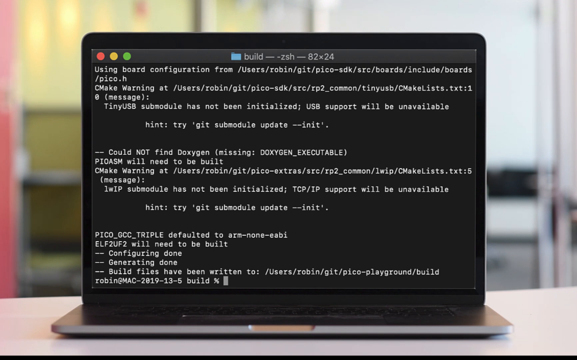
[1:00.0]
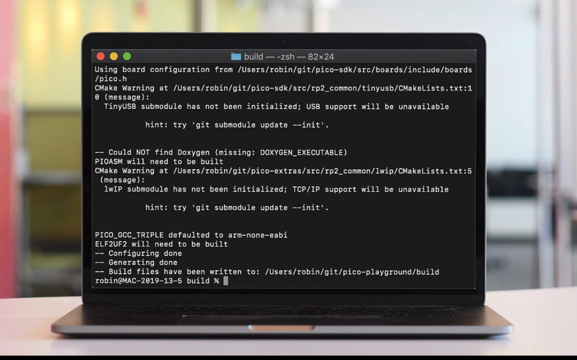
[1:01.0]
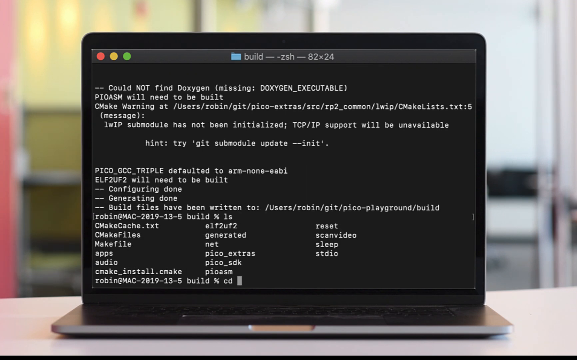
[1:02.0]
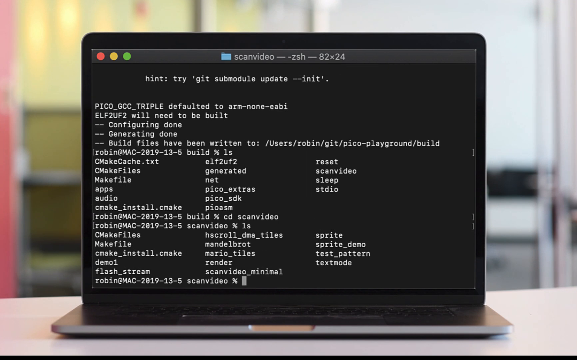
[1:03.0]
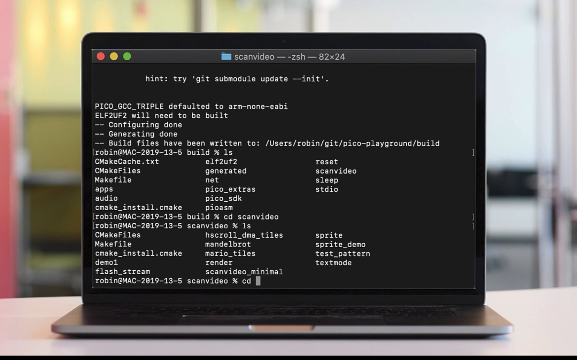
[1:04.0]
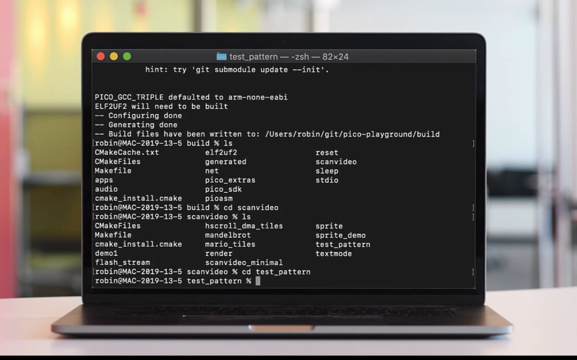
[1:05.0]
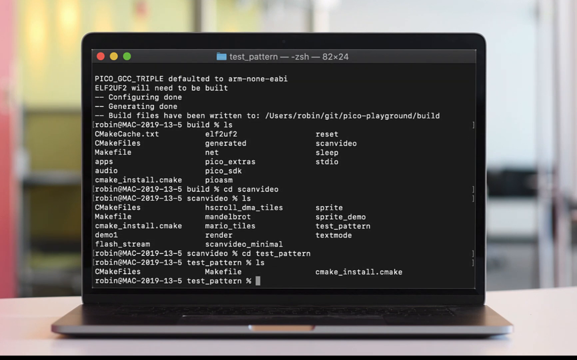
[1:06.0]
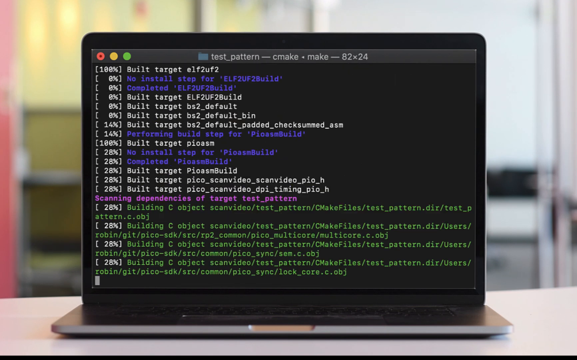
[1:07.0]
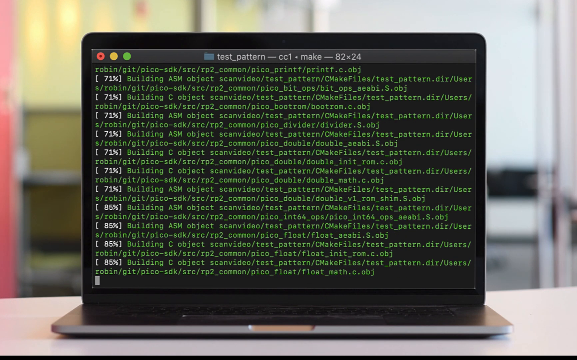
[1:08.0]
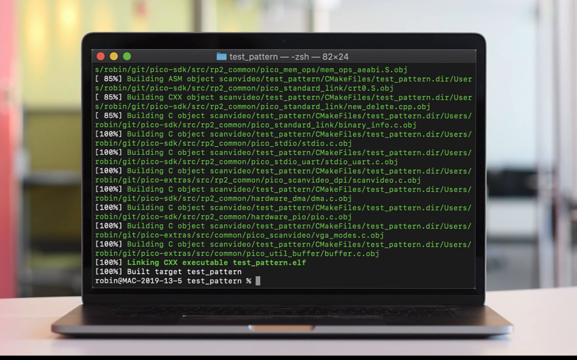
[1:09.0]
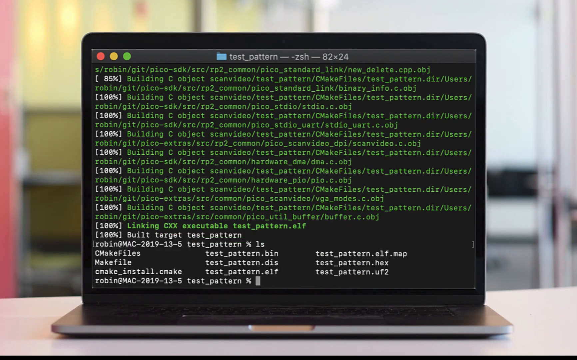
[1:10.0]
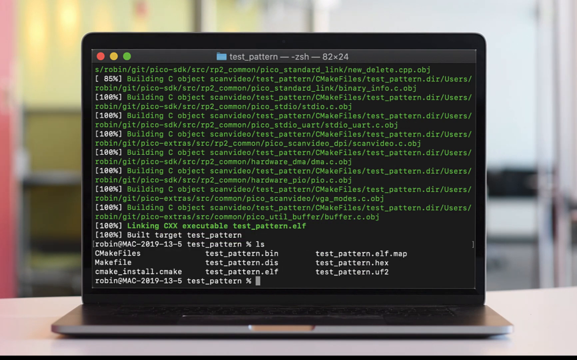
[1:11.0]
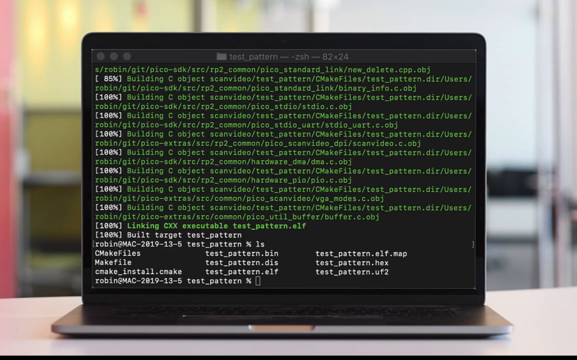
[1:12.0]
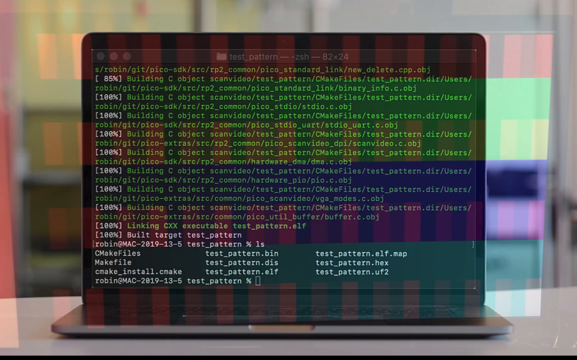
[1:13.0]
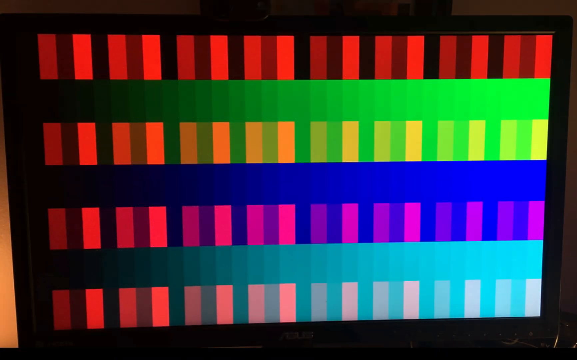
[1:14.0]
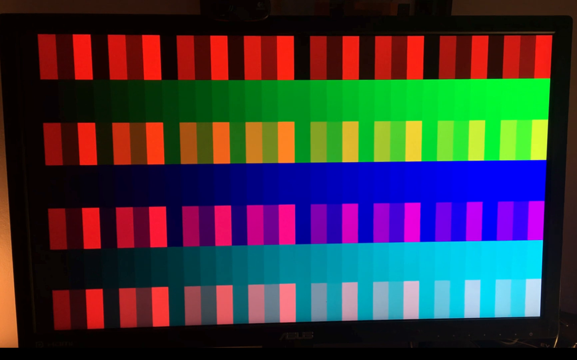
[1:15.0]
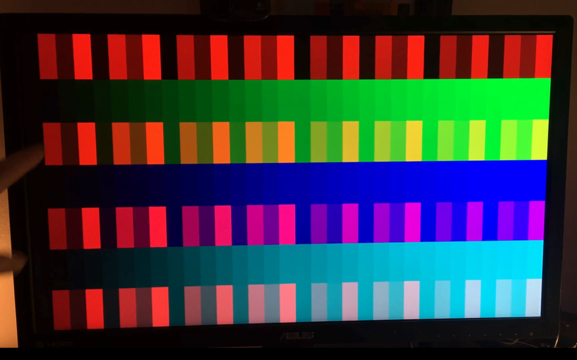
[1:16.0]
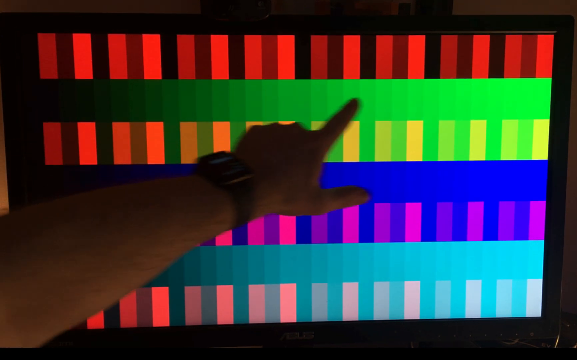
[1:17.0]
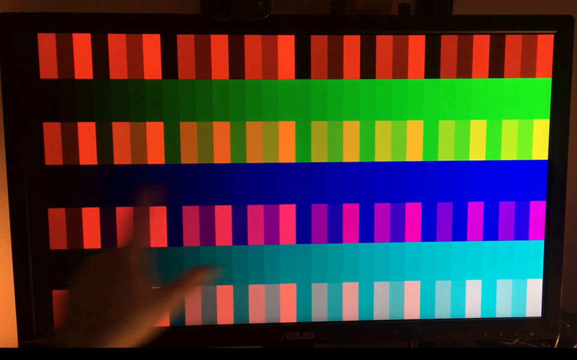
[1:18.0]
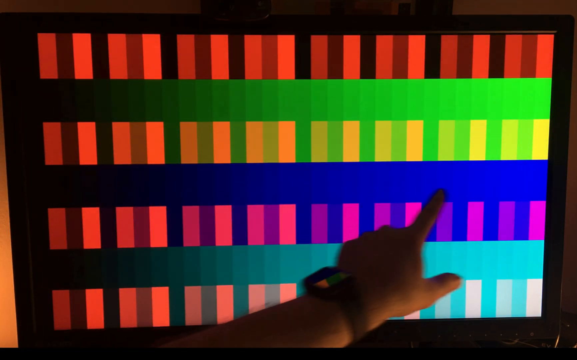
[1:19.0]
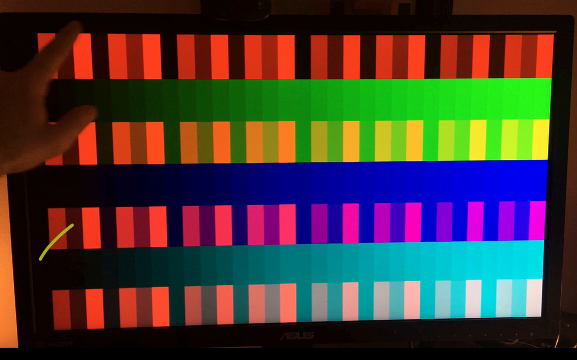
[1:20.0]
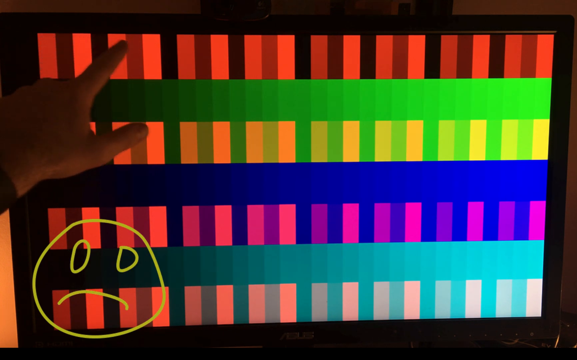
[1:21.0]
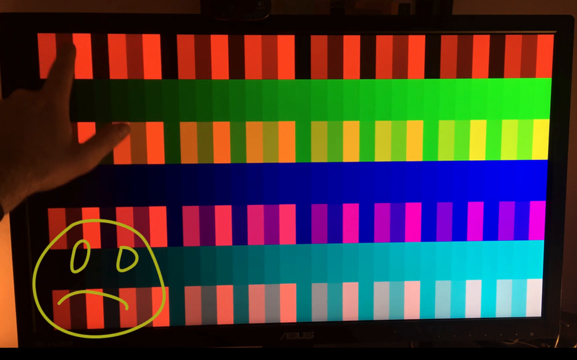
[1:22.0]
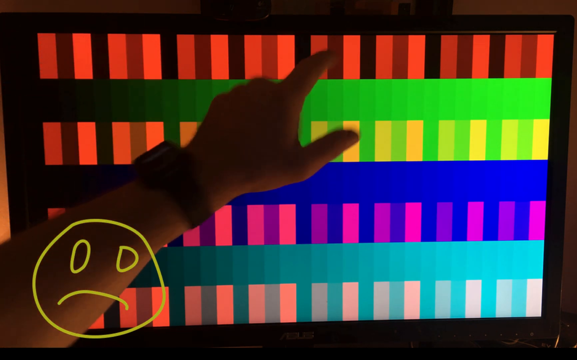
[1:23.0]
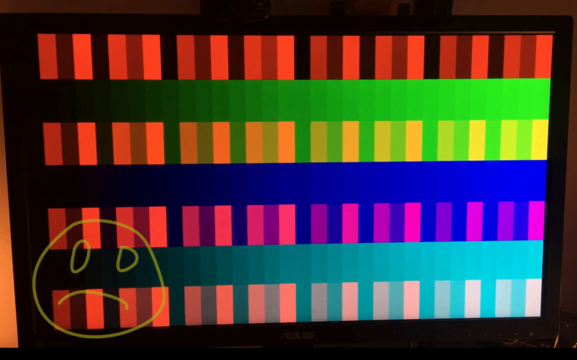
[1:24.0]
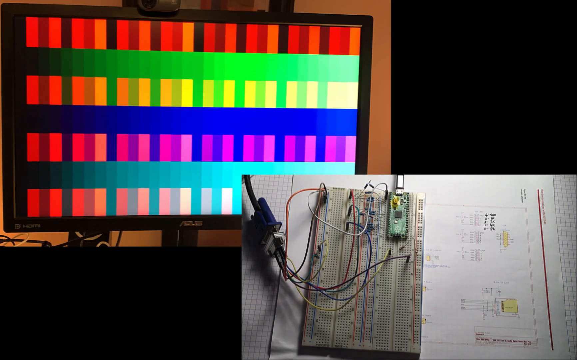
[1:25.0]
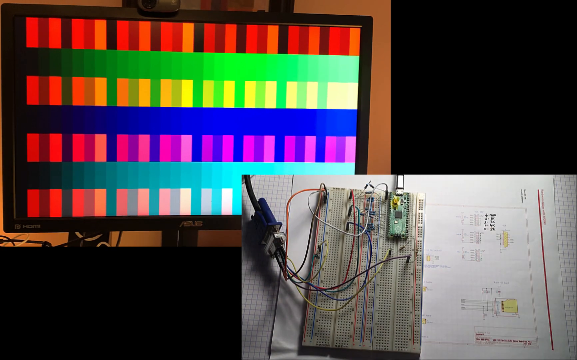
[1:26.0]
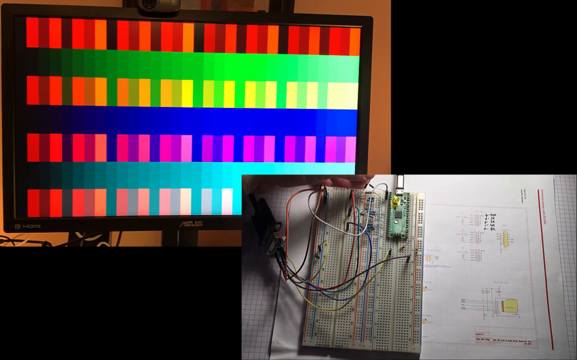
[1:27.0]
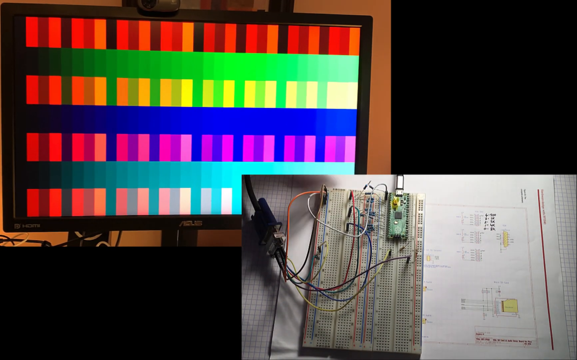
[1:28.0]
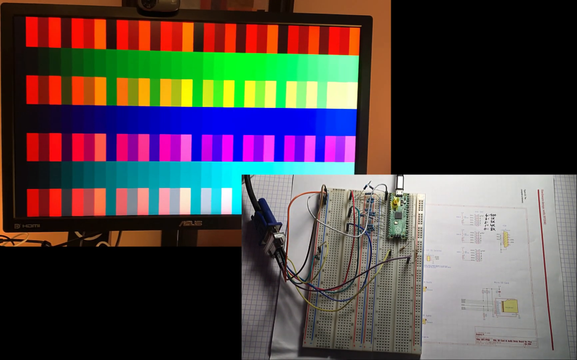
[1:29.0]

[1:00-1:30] A laptop computer is on a table, and its black screen shows code written in white text. The cursor moves from left to right entering code; the code turns green, then white again, and the cursor moves across the screen. The video transitions to a close-up of a computer monitor with what appears to be a webcam at the top. The screen shows multiple vibrant colors: oranges, neon greens, lime, electric blues, lavender, baby blue, and white. A person's left hand enters the frame and points to a section, then runs from left to right pointing out the colors. A drawn frowning face, like a stick person's head, appears at the bottom left of the screen. At the bottom right, an image appears of what looks like an electronic board and a white sheet of paper that looks like a diagram explaining it, with a person's hand pointing to certain parts.